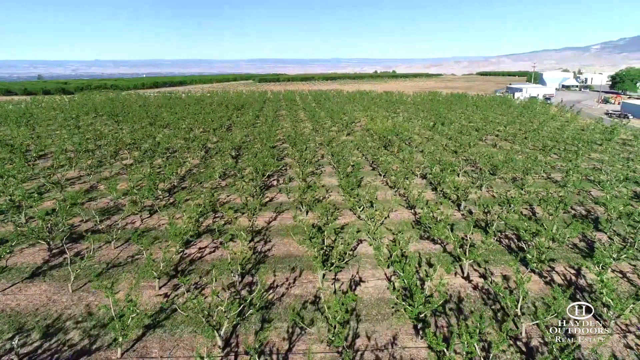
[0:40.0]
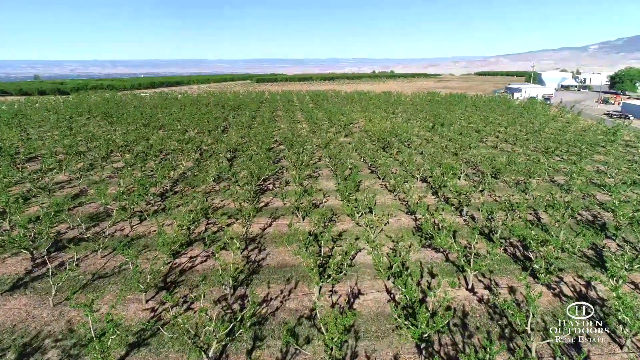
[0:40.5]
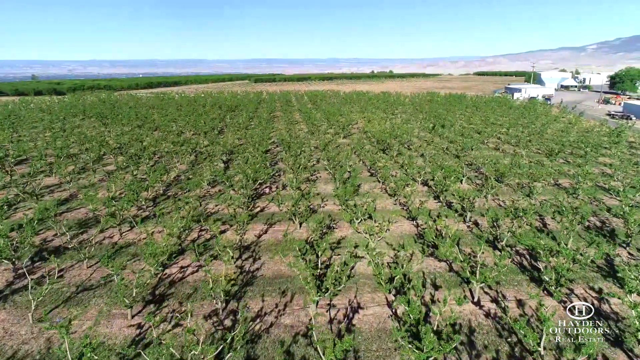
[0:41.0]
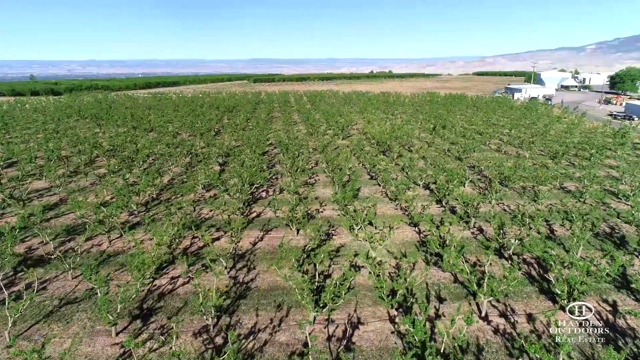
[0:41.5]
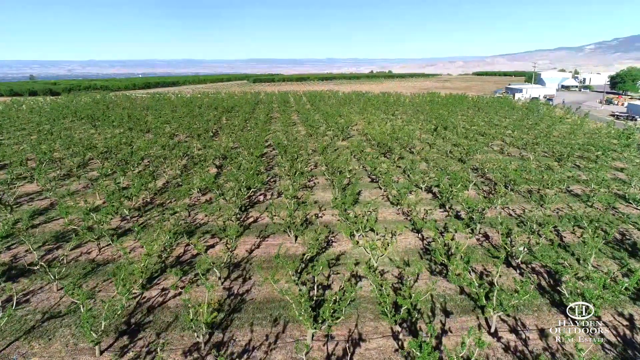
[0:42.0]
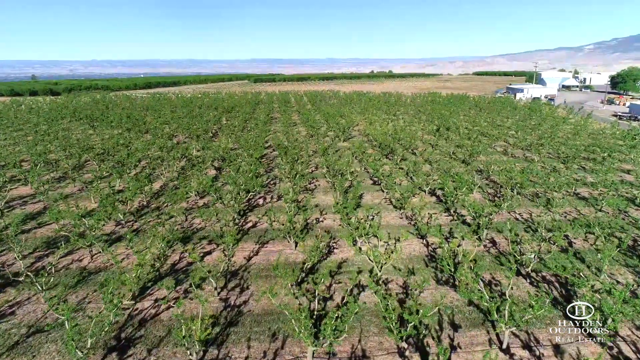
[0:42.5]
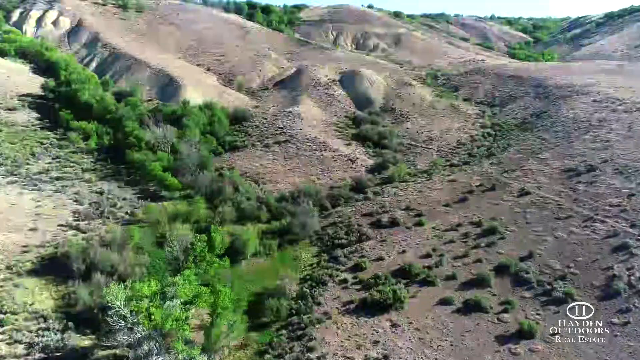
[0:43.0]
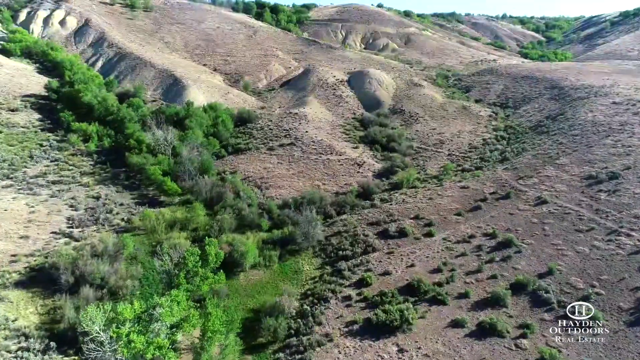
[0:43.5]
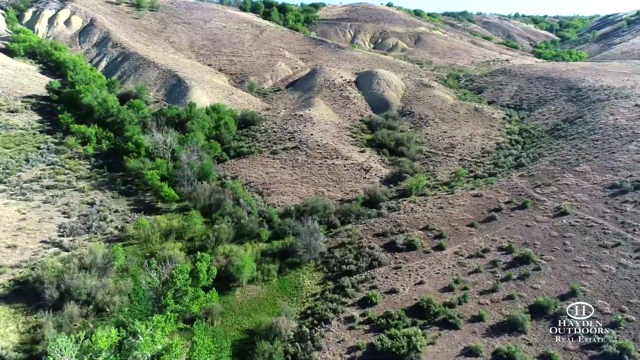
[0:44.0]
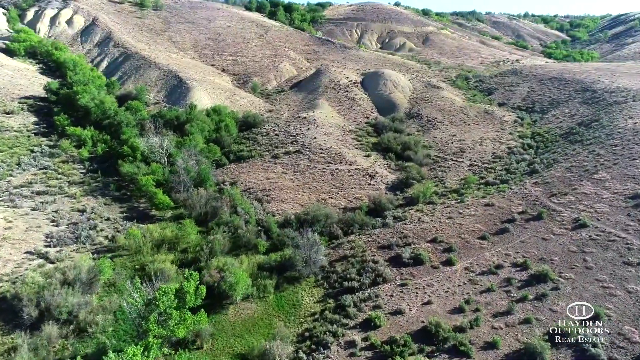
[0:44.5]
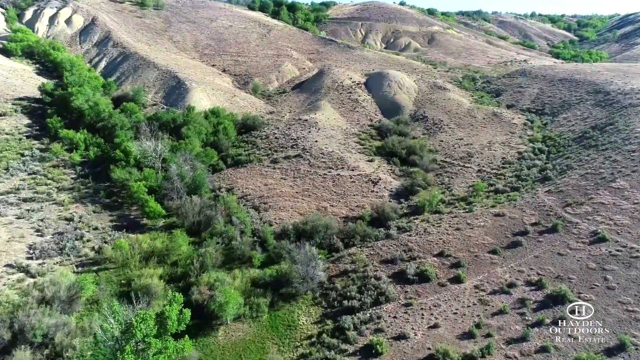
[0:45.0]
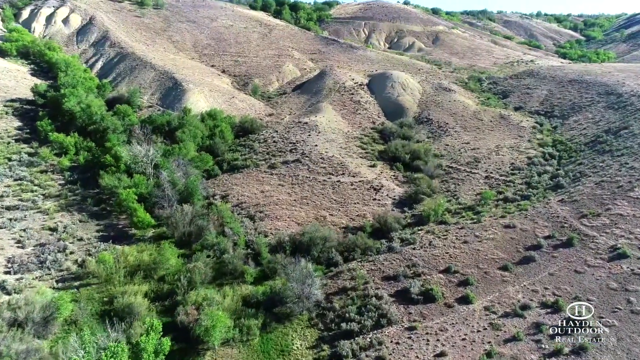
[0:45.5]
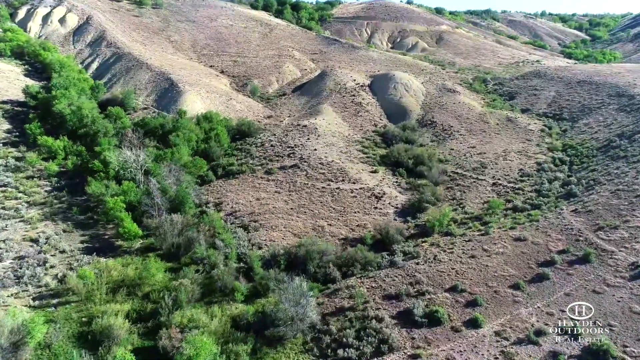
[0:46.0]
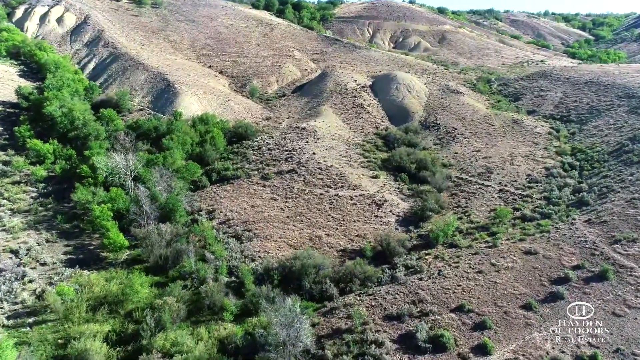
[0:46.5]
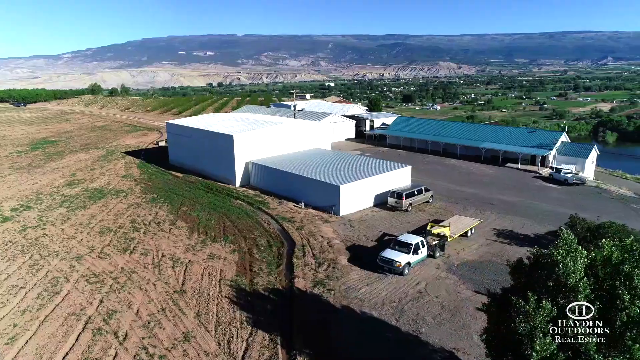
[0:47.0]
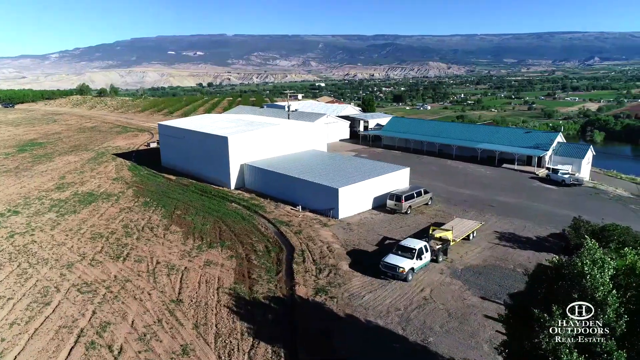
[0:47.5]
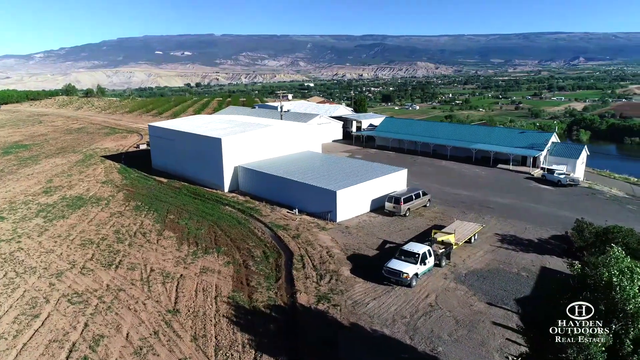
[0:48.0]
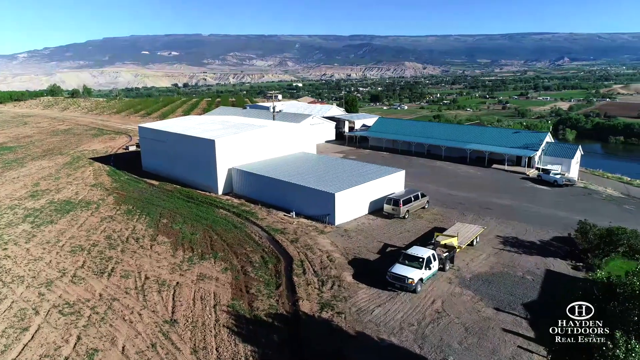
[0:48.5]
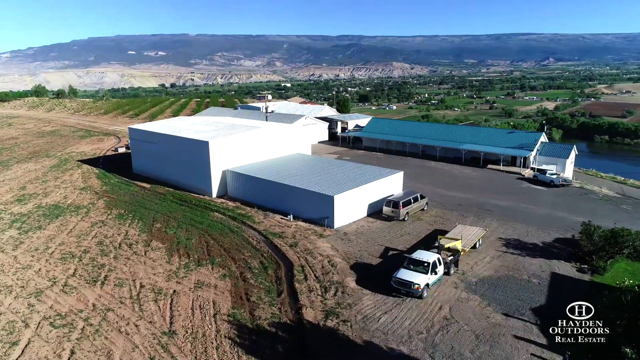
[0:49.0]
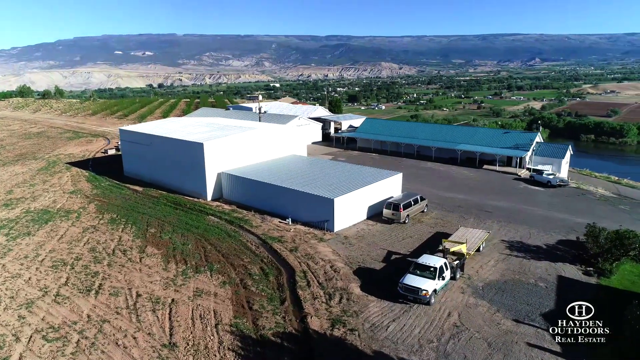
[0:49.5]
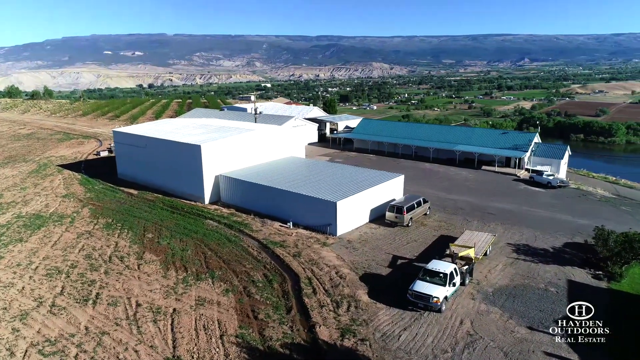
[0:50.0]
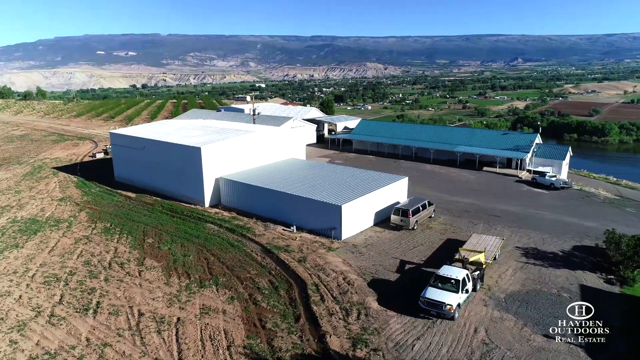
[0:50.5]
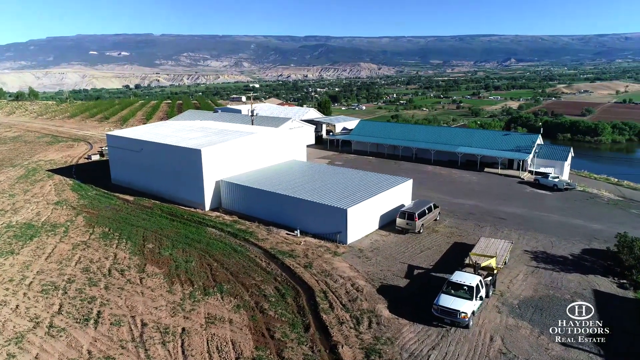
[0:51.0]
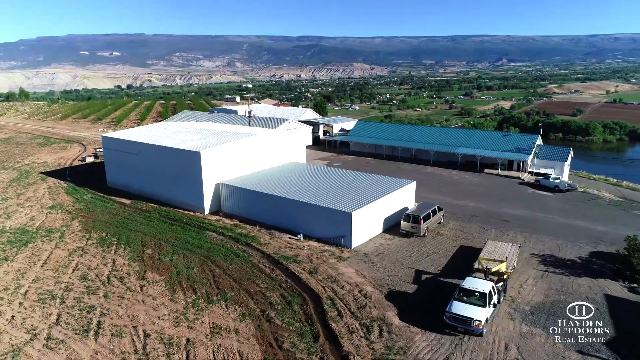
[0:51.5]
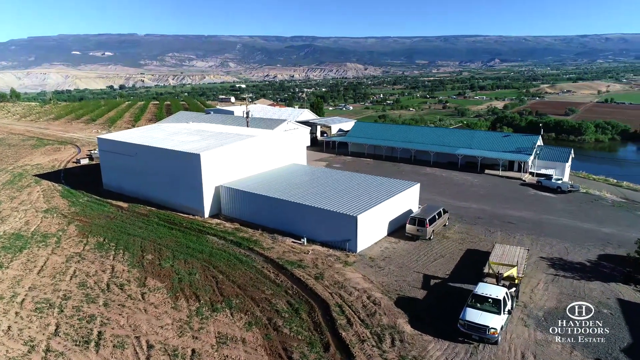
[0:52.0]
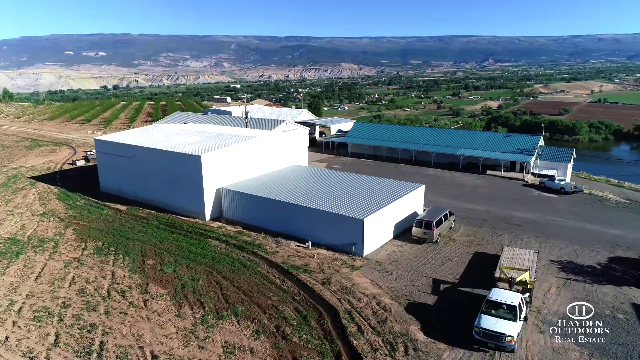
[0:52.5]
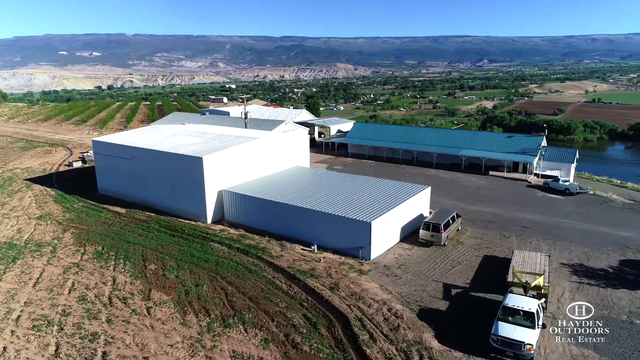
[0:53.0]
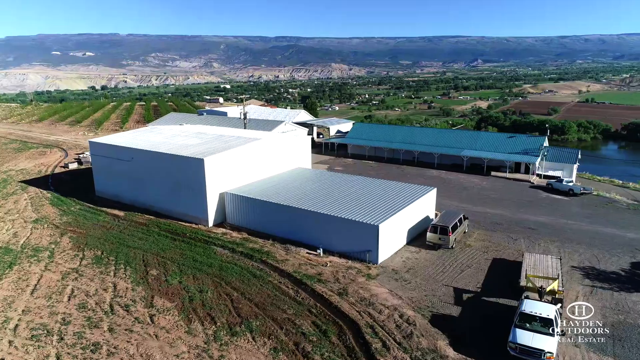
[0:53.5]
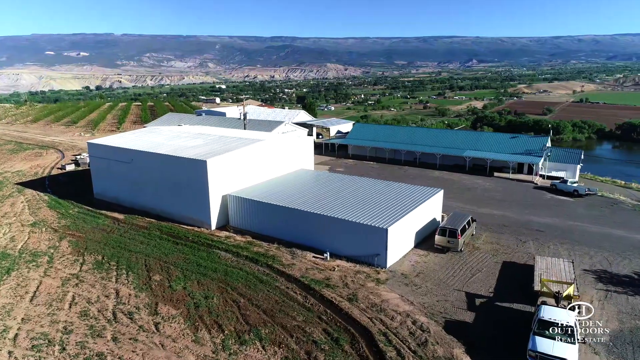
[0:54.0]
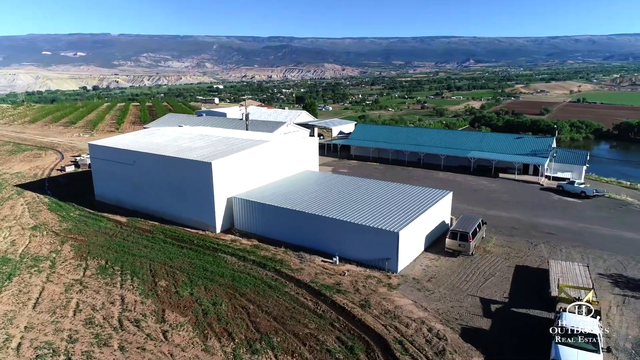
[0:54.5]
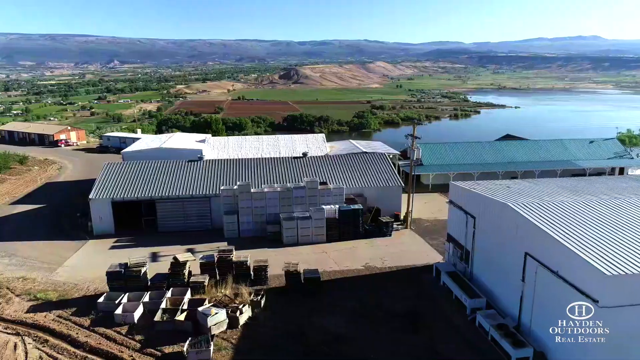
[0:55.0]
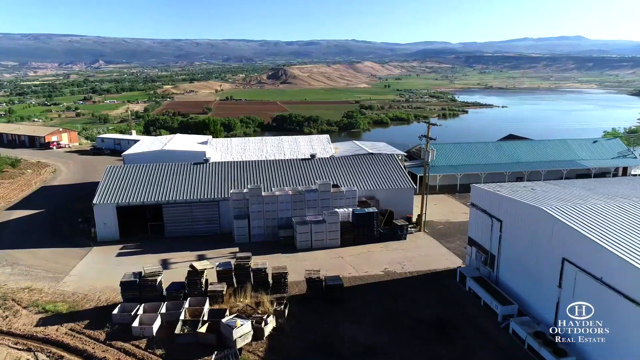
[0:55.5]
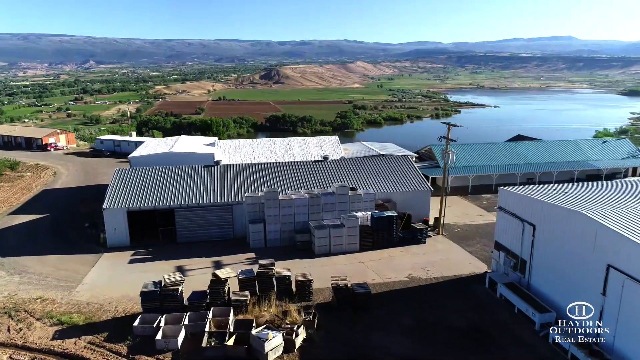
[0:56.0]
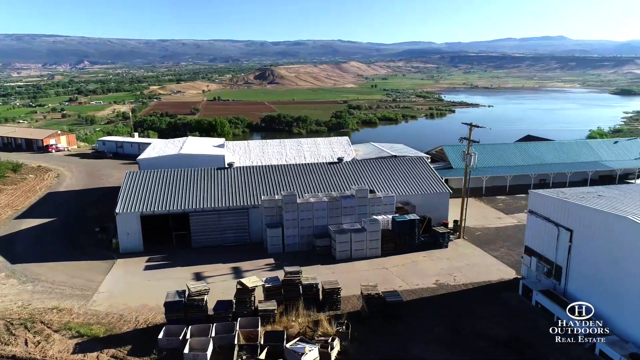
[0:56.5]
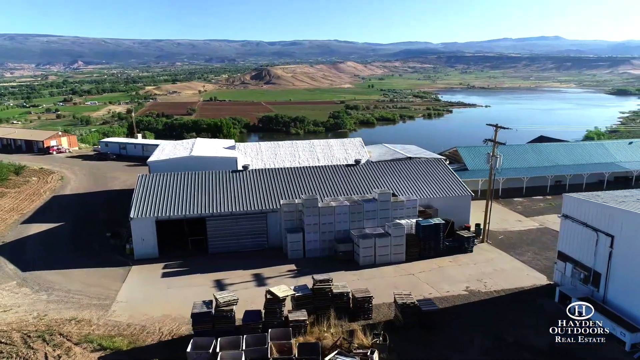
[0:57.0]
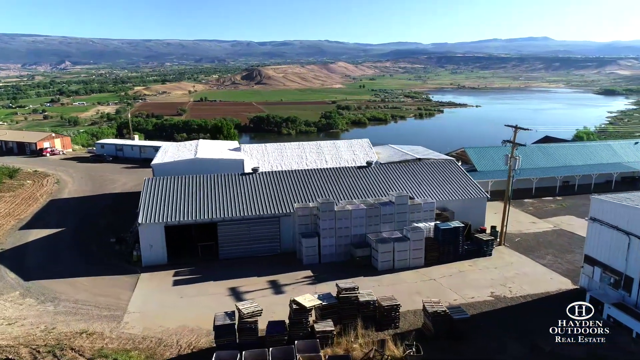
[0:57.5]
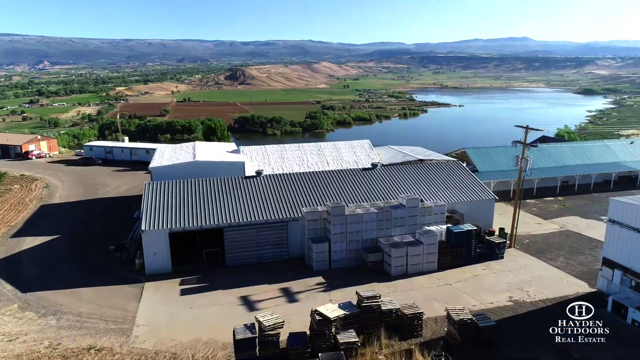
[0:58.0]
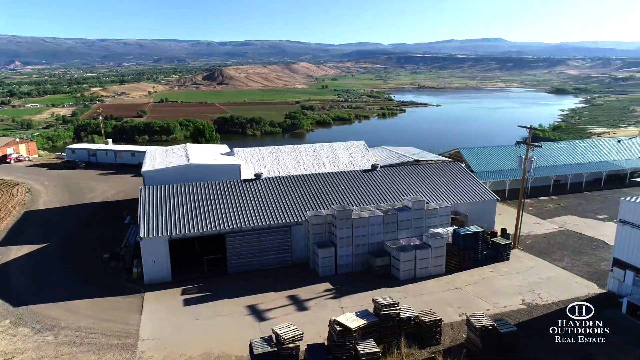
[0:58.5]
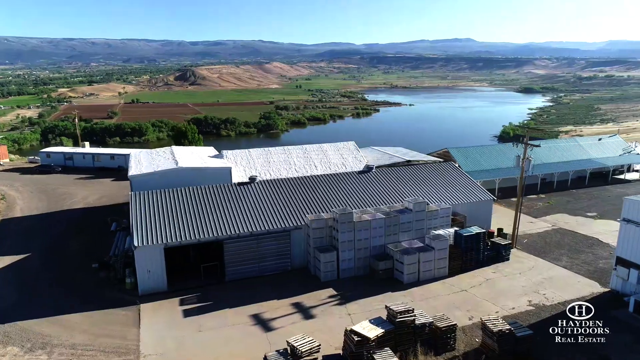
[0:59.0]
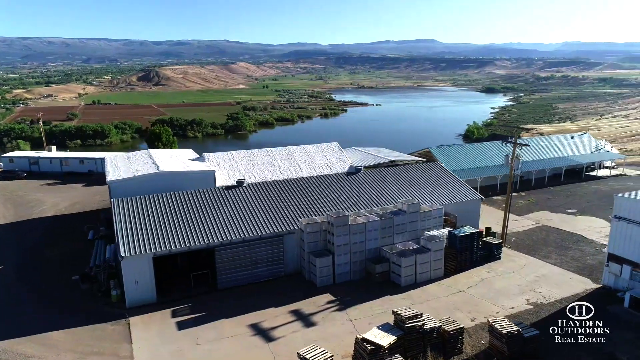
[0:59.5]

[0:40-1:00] The same shot of the fields continues, then the video cuts to another aerial shot, kind of slow motion, filming over the landscape, maybe with a drone. It shows more rocky terrain that looks like hills with green foliage intertwined. Then comes an aerial view of the property itself: a couple of vehicles, like a pickup truck and a trailer, and a people carrier in the parking lot, along with some big white buildings and a lower-roofed, long building with a kind of patio area. In the background are a river, more farmland, low-lying hills and a mixture of colours: greener fields, quite dry brown-looking grass patches and dirt patches. There are more properties just to the left of these warehouse-like, farm-looking buildings.